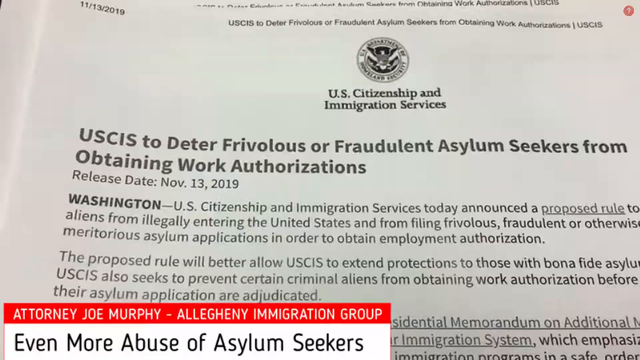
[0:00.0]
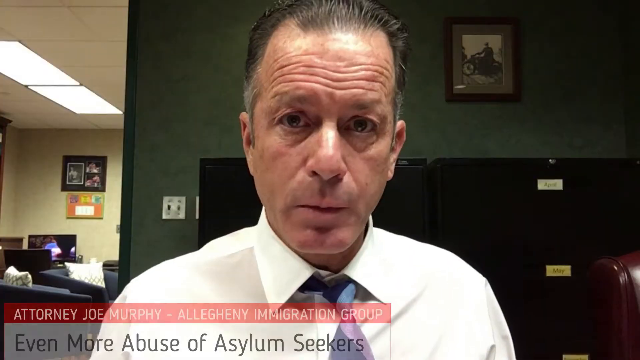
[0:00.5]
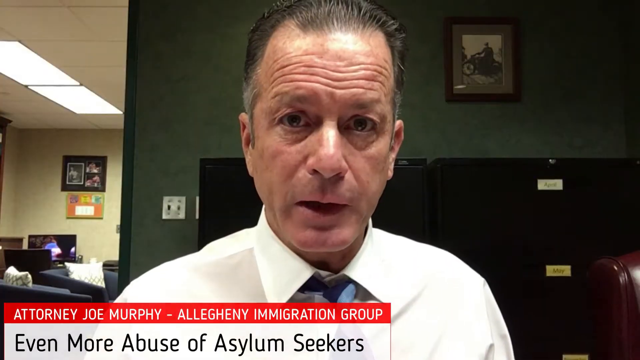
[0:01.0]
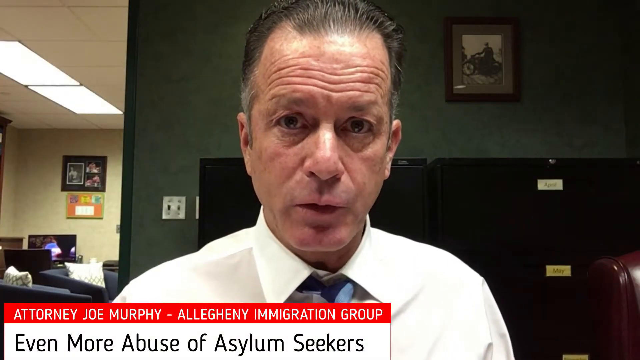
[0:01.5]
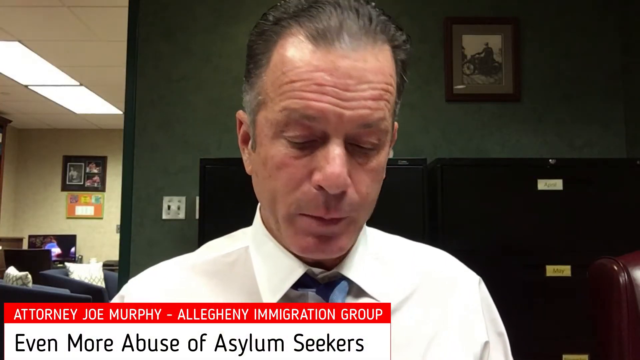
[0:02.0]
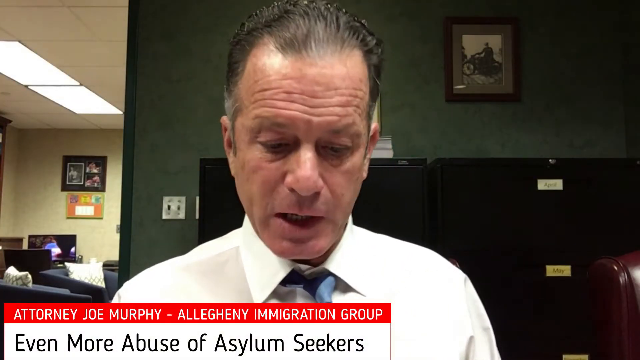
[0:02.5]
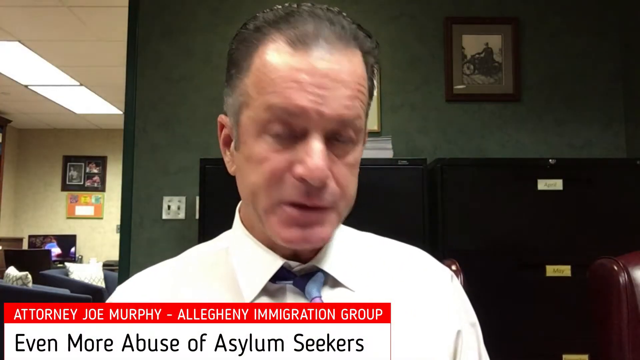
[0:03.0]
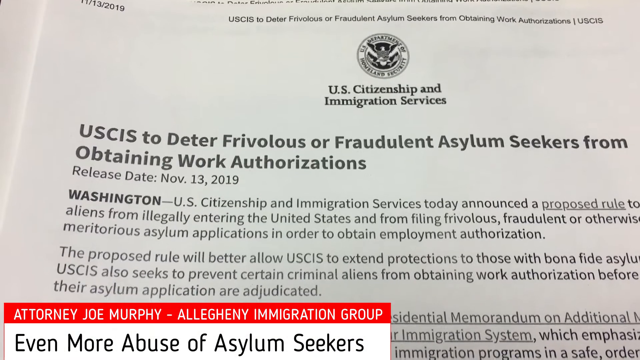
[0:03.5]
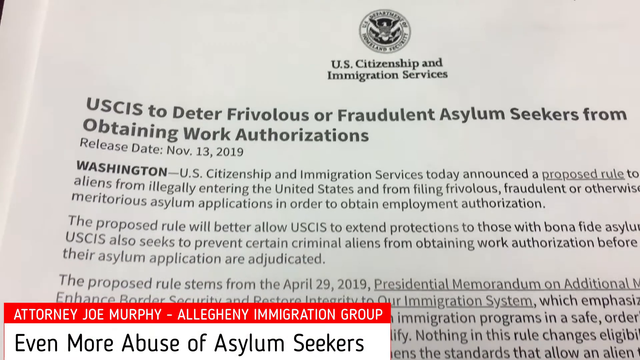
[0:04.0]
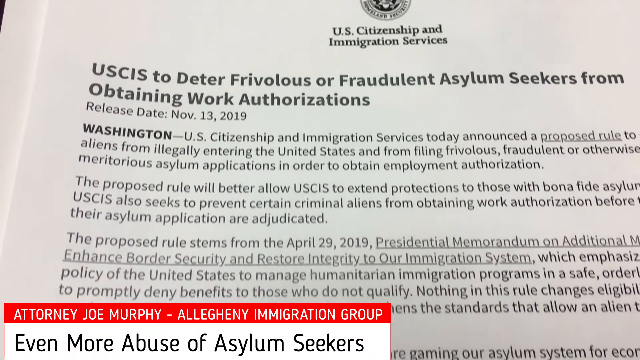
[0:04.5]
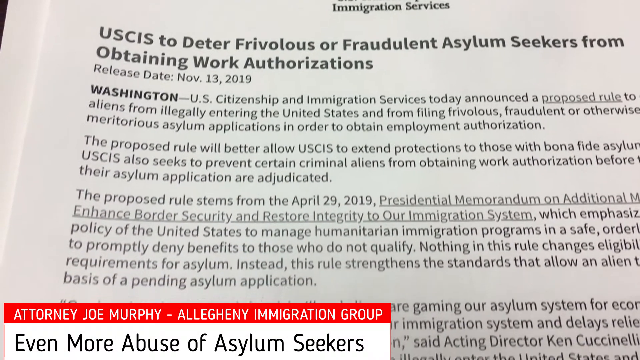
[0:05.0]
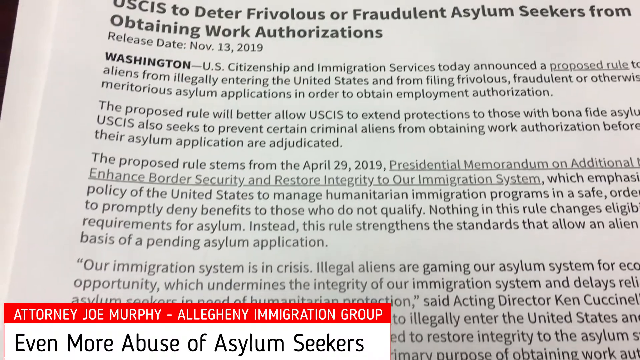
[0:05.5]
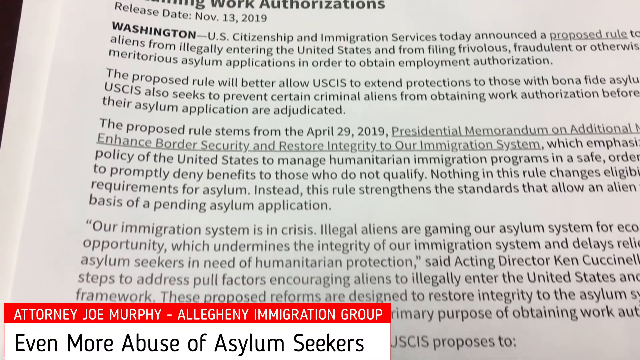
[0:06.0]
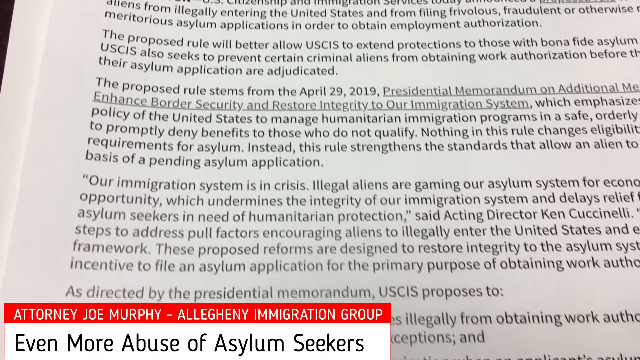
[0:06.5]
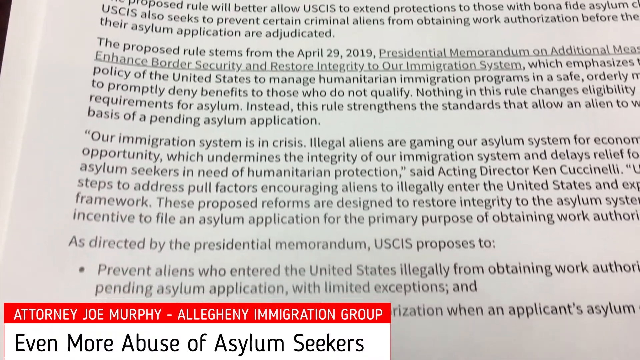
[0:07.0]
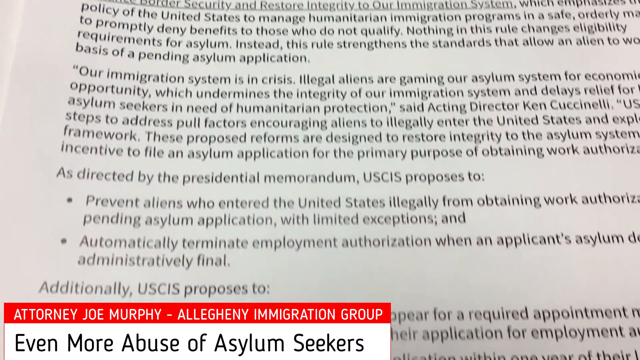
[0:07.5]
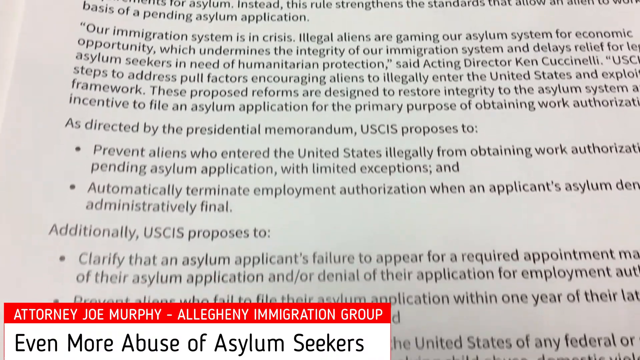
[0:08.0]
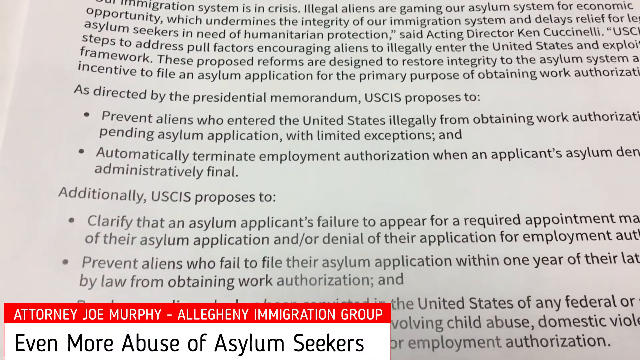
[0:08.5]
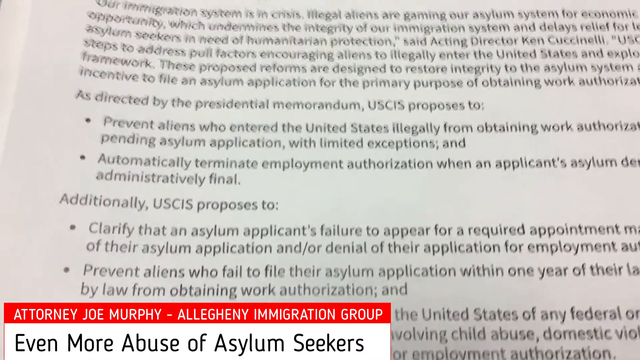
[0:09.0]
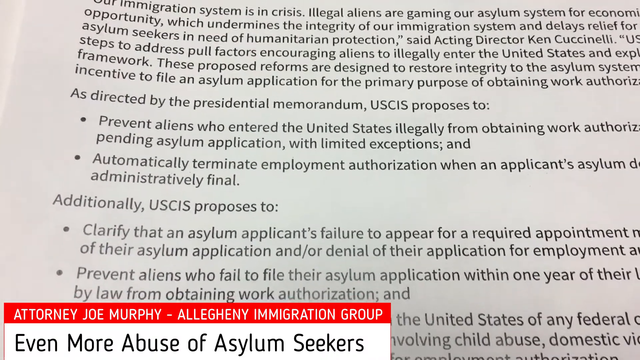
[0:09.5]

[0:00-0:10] A document from U.S. Citizenship and Immigration Service is shown: a white paper with information written in black. Its headline reads "USCIS to deter frivolous or fraudulent asylum seekers from obtaining work authorization," and it was released on November 13, 2019. It also has information from Washington stating that "U.S. Citizens and Immigration Service today announced a proposed rule" concerning illegal entry into the United States and "filing frivolous, fraudulent, or otherwise, application in order to obtain employment authorization." The visual then changes to a male news reporter.